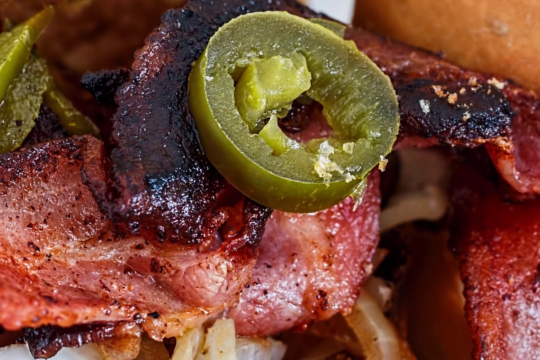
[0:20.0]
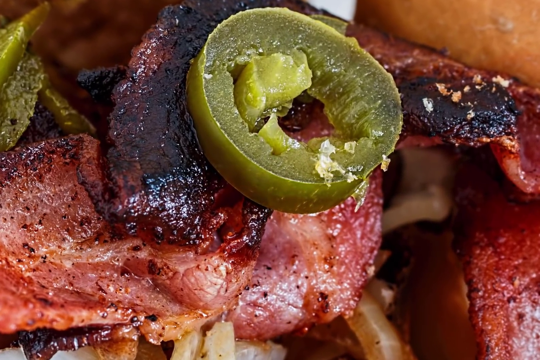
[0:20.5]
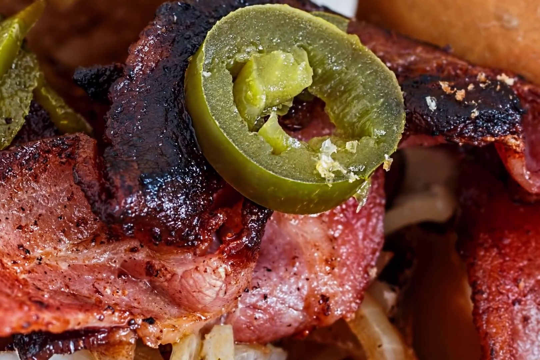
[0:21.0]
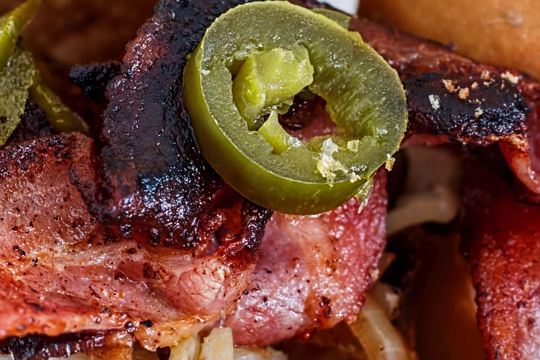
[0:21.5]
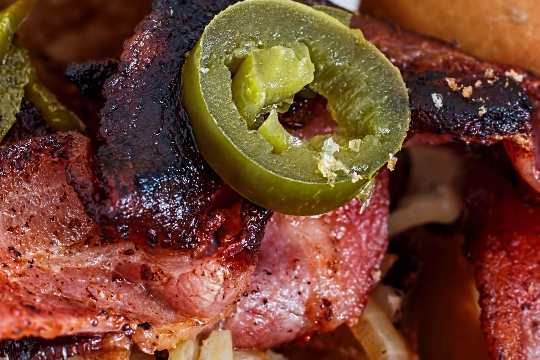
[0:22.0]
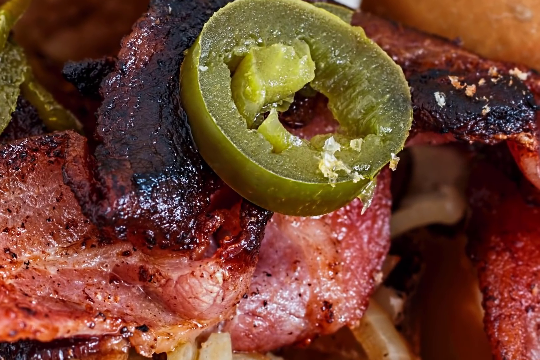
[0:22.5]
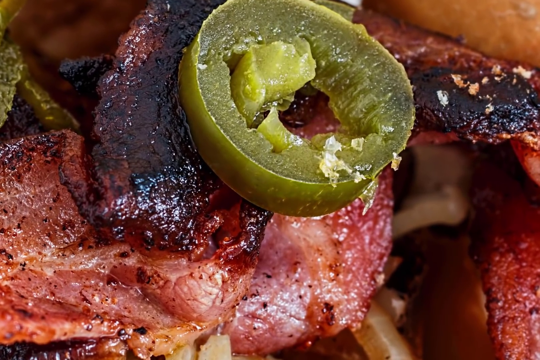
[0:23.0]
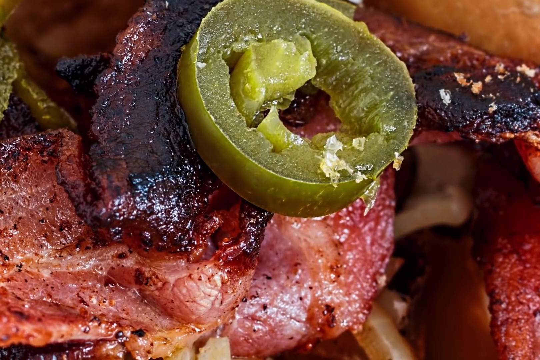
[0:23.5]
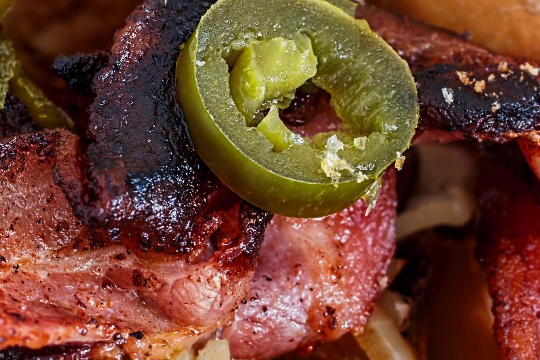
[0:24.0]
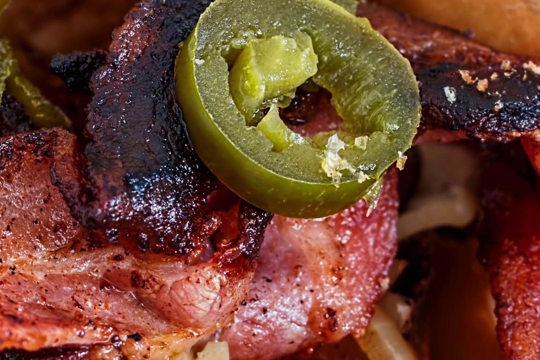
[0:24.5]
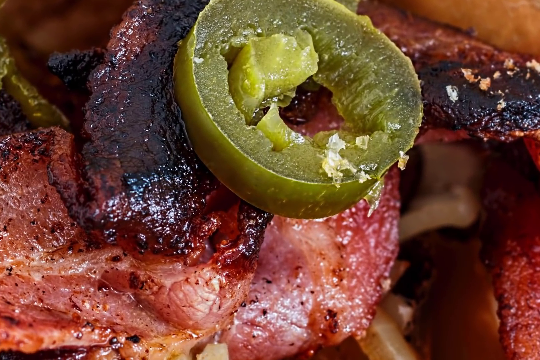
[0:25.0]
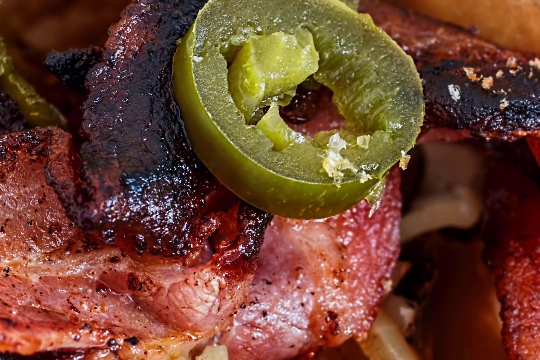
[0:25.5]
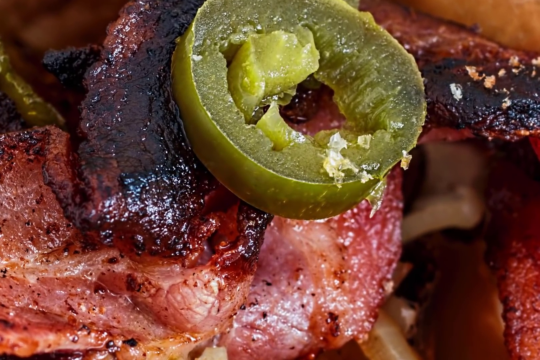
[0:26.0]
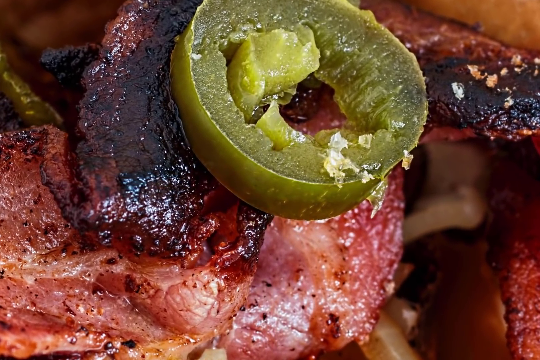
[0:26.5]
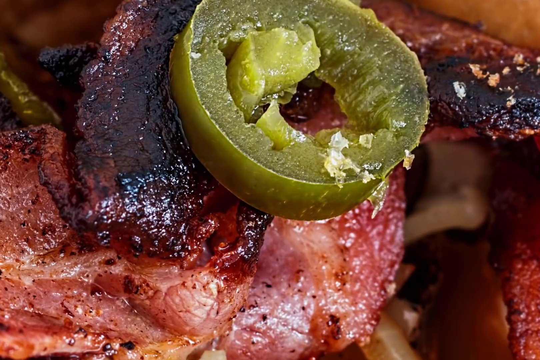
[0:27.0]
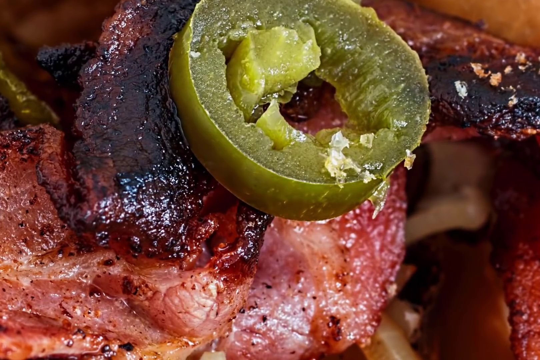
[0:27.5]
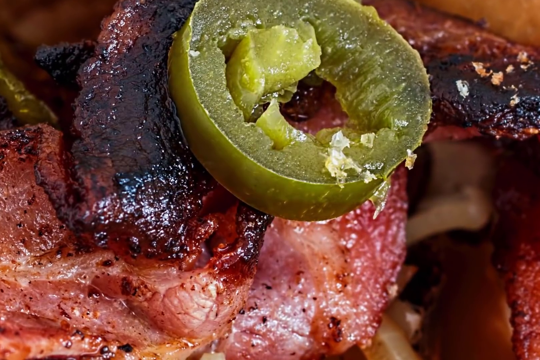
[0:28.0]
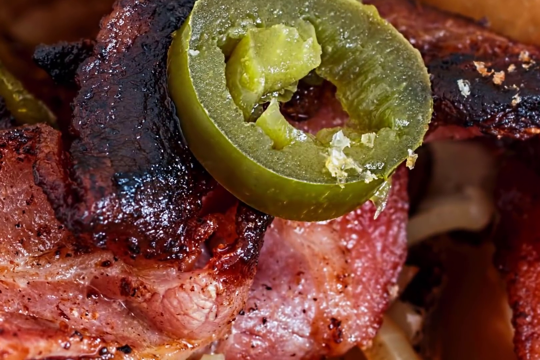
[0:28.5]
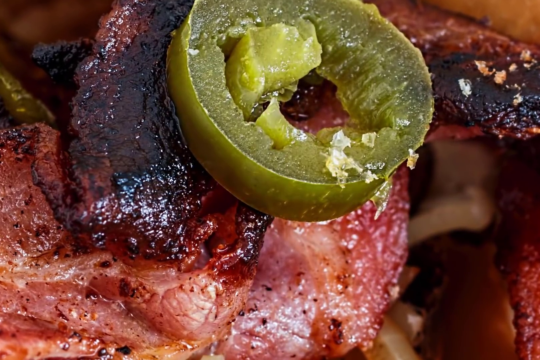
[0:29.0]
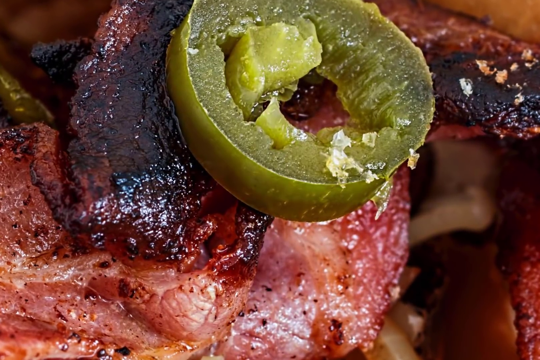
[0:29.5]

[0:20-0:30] Another bagel looks juicy, with bacon, onion rings and jalapeno inside.